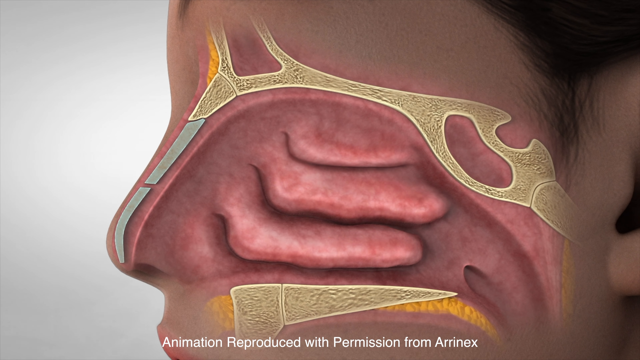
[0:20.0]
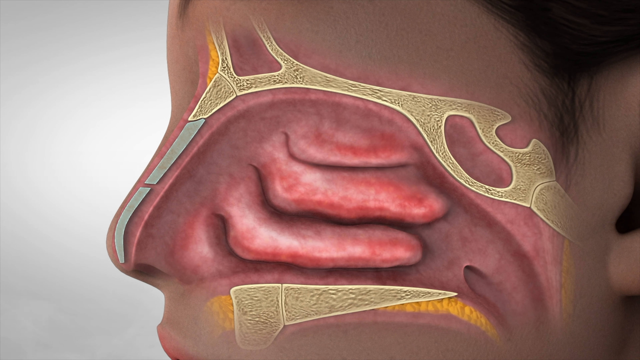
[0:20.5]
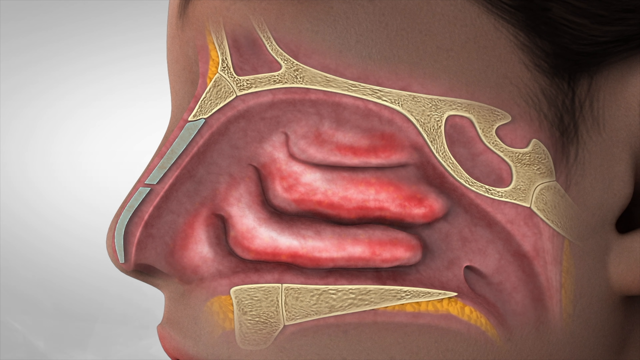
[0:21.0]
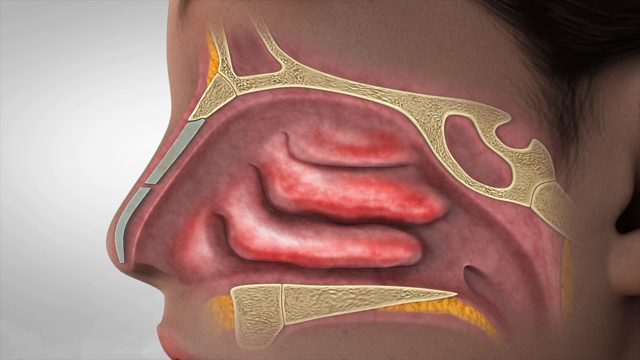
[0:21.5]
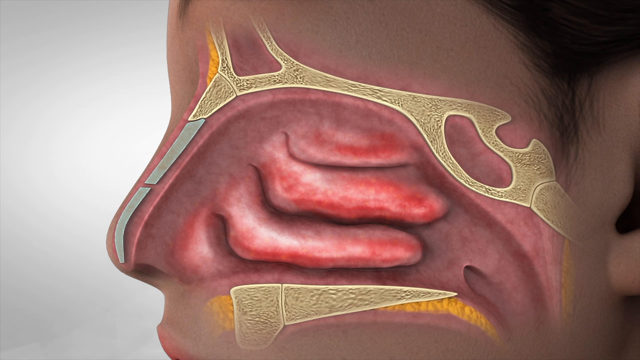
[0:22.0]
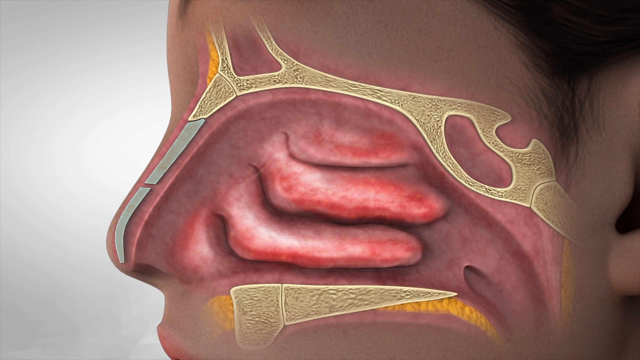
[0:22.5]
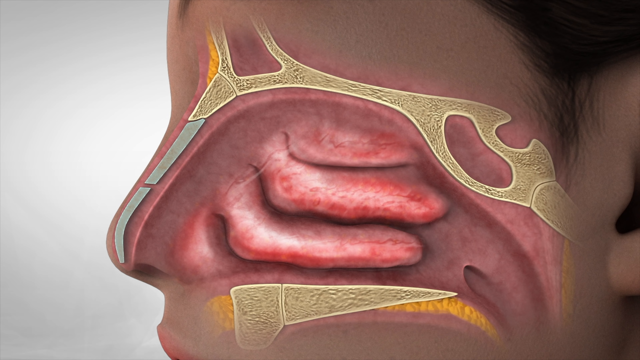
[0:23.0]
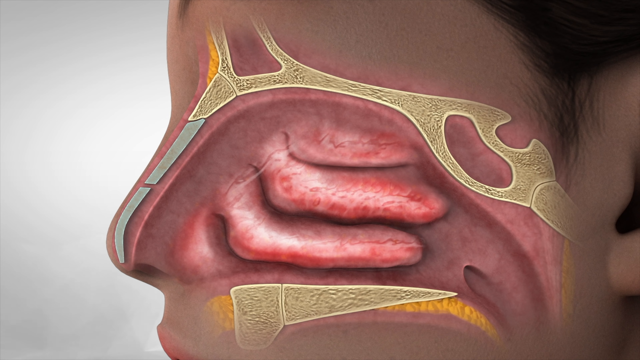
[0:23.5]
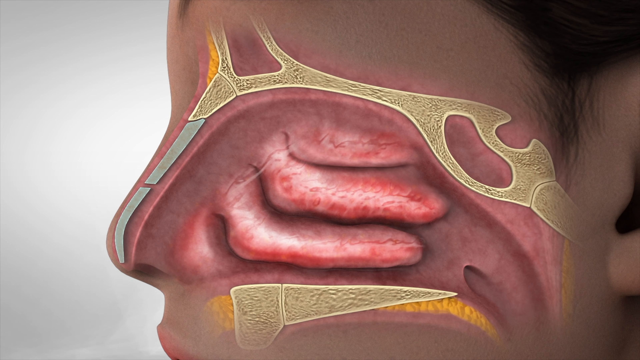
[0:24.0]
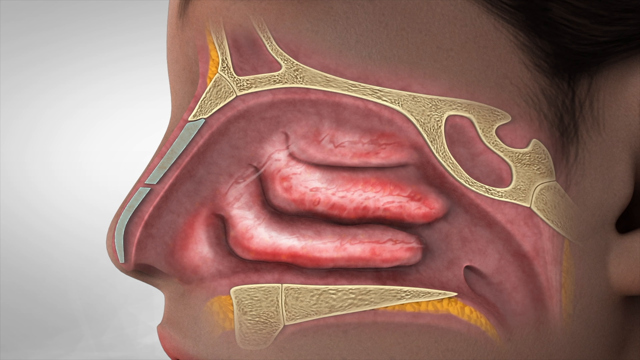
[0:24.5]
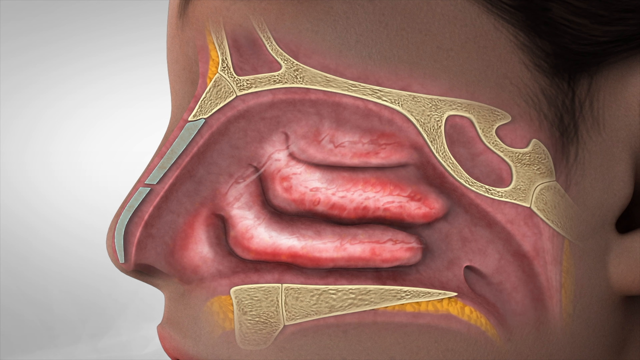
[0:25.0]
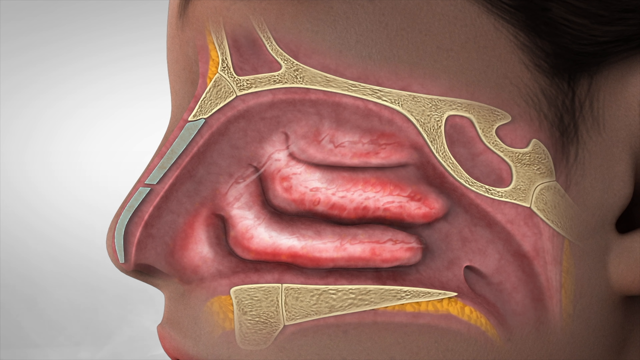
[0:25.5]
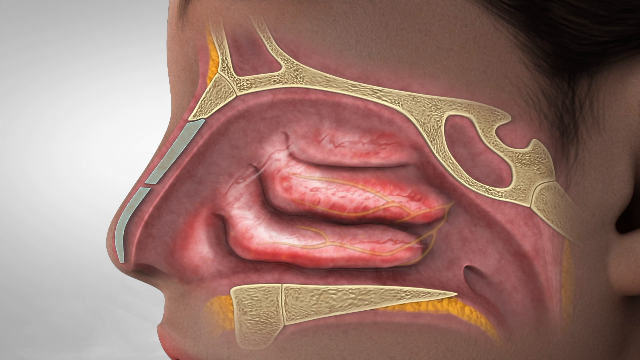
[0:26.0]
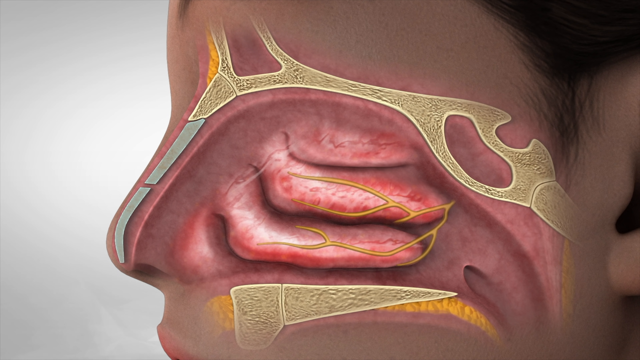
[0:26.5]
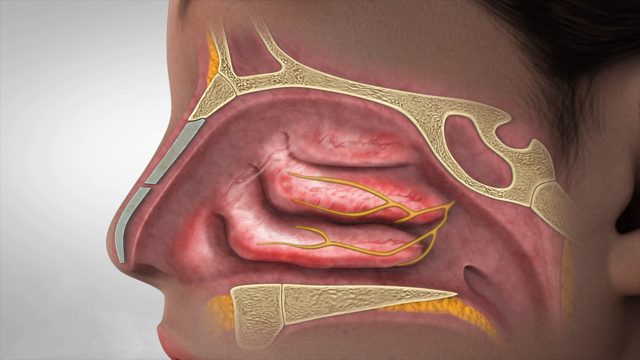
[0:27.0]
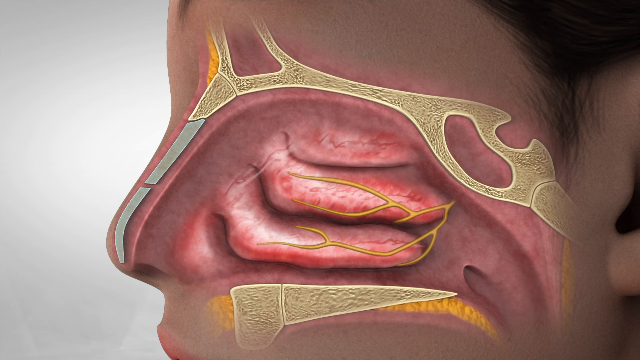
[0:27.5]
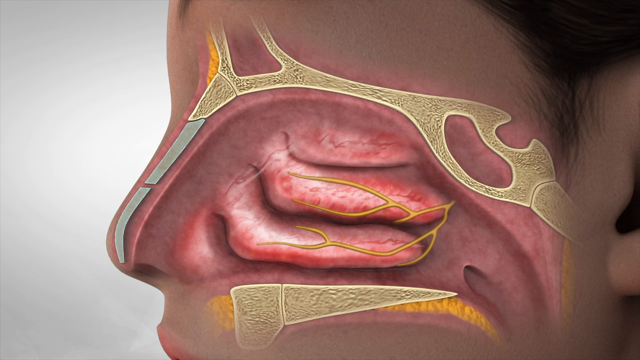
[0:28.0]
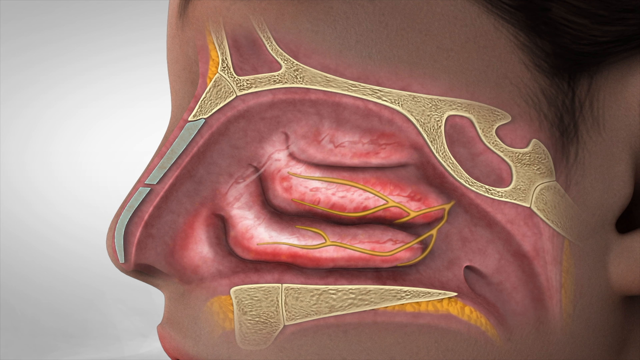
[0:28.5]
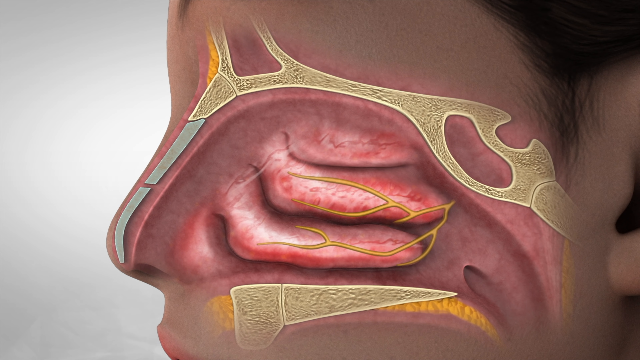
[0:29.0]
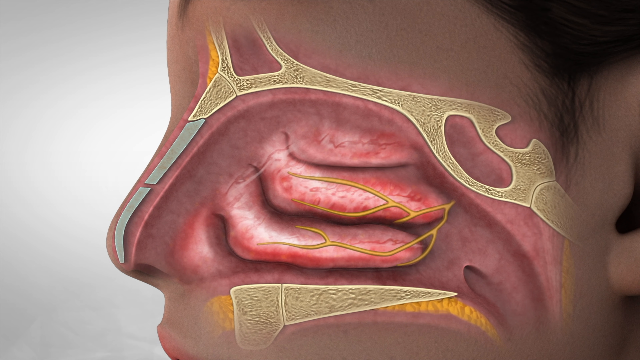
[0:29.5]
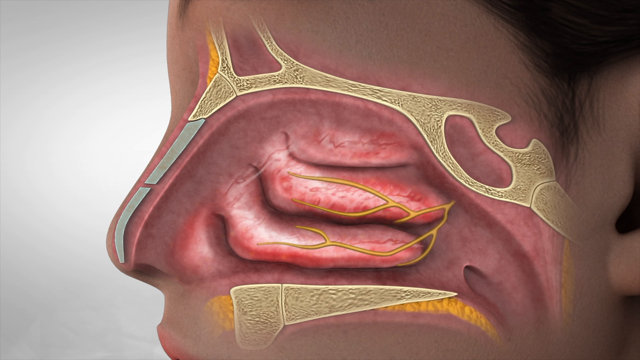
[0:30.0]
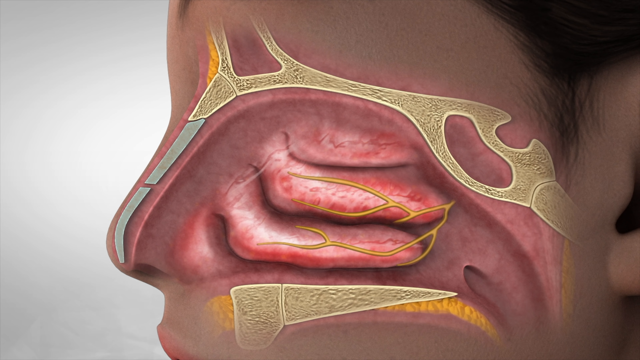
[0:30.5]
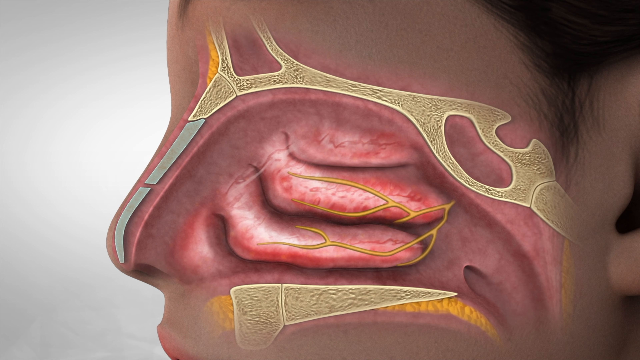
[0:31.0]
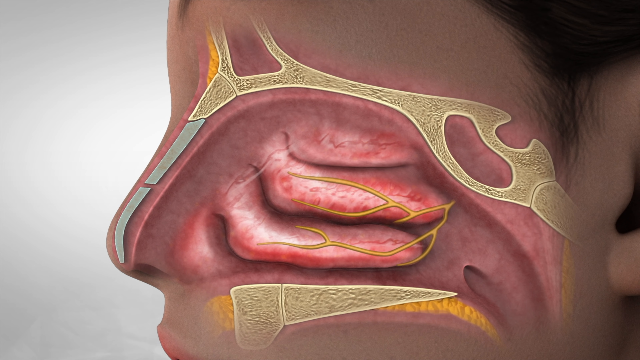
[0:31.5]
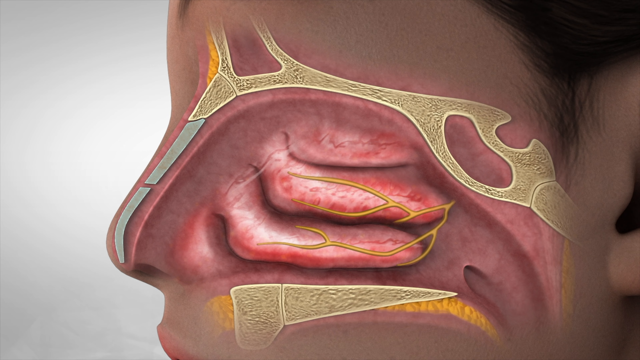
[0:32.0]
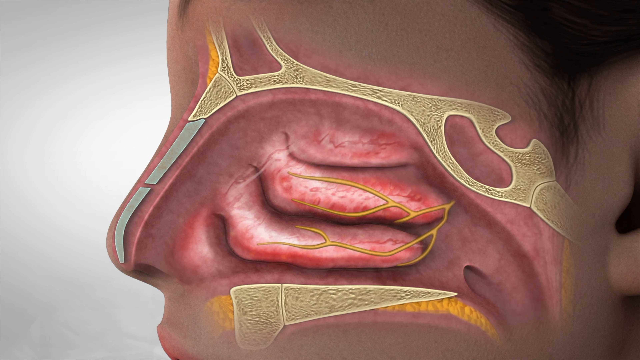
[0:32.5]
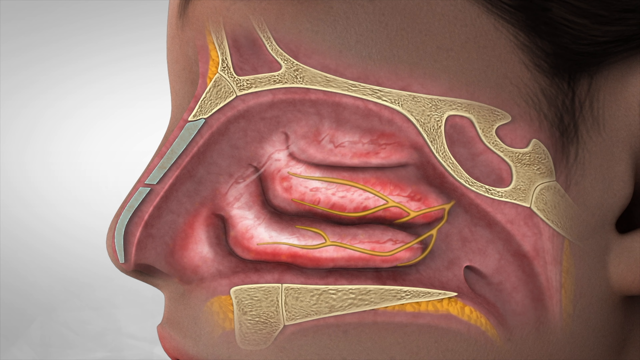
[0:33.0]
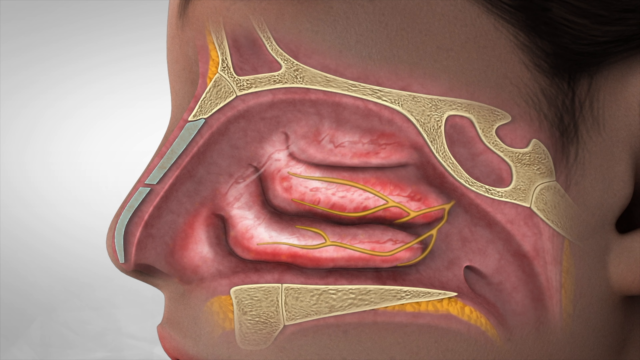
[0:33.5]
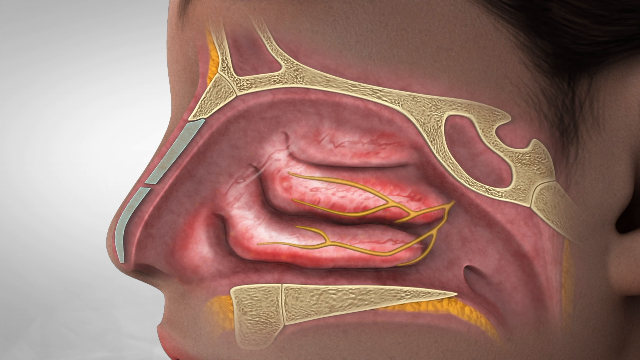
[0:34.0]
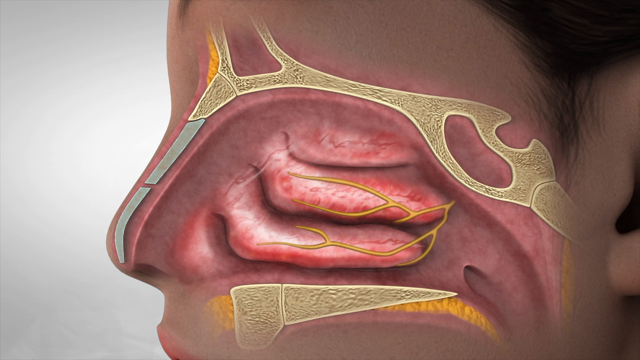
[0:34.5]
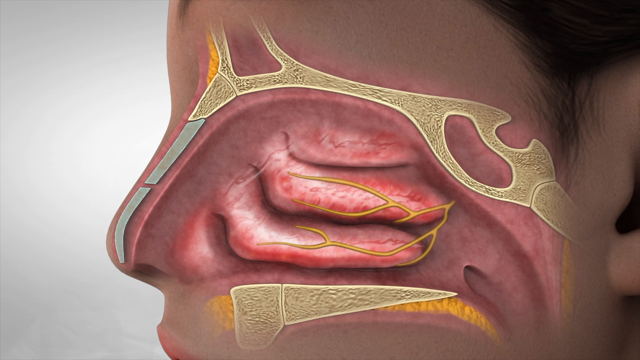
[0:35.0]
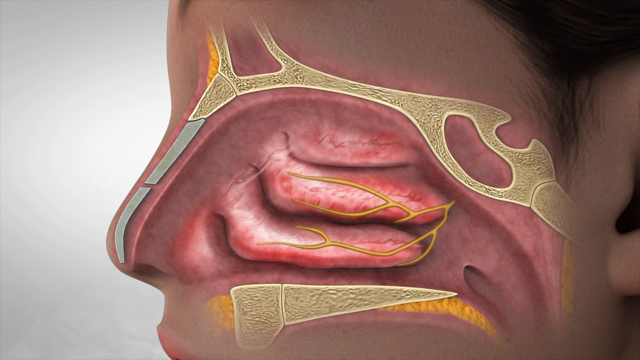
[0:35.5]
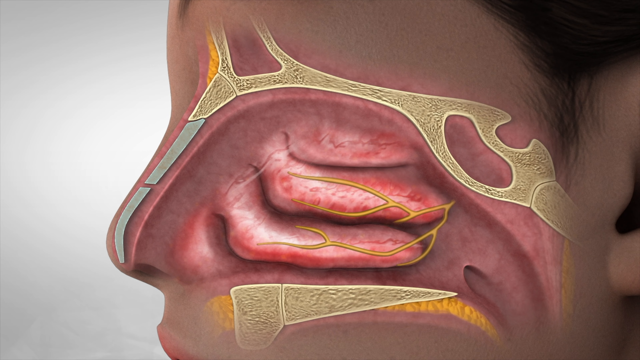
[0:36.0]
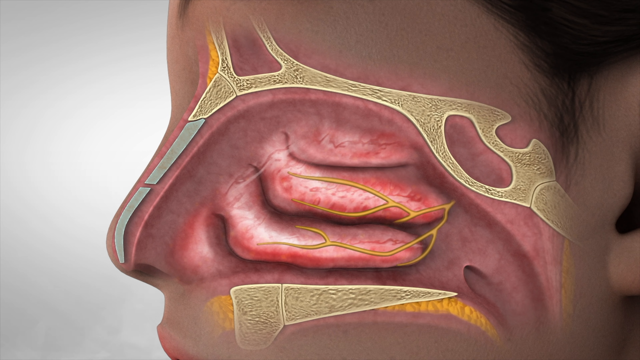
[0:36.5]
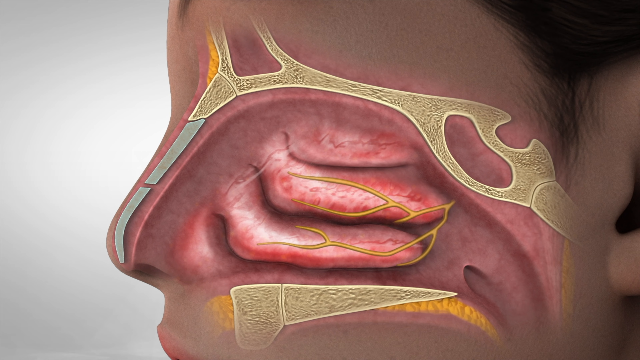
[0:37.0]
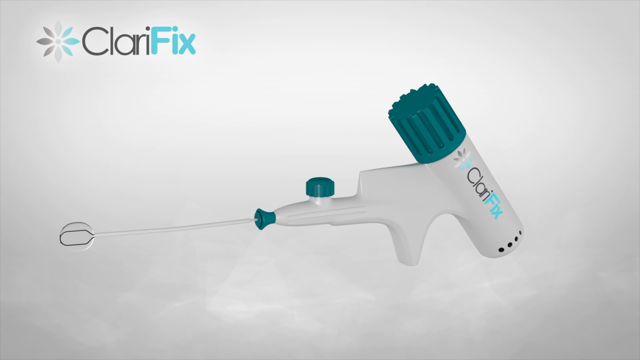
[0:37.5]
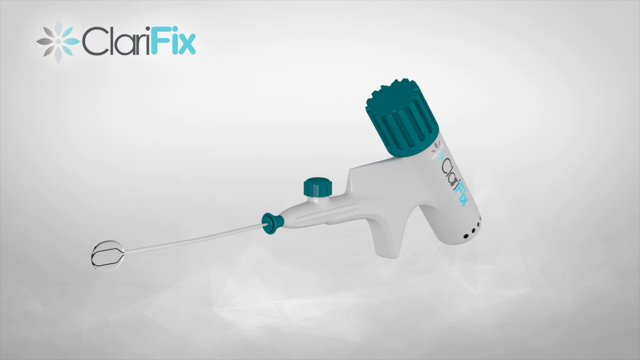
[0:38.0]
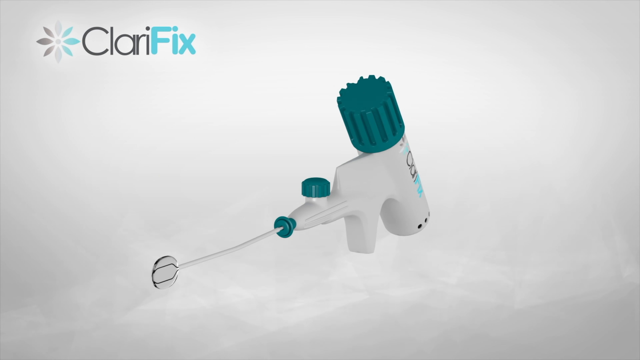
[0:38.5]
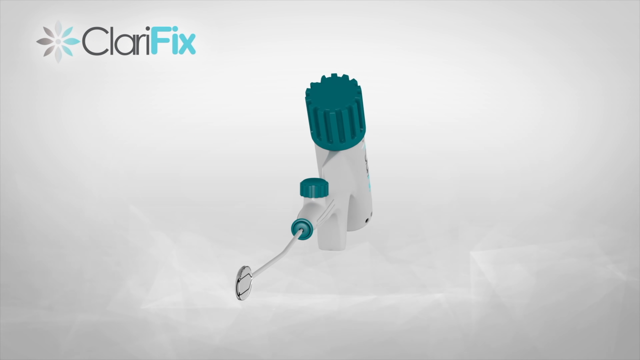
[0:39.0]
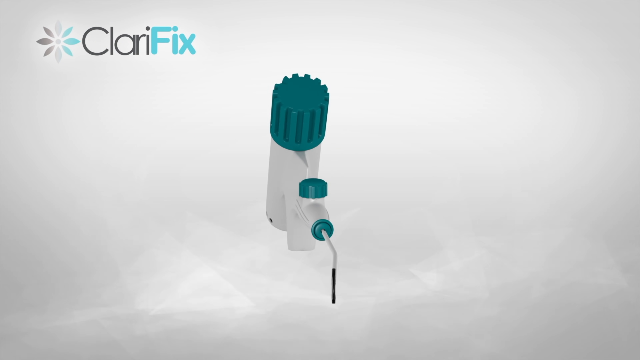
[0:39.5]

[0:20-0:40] The graphic shows different parts of the nasal cavity, with various lines and pathways, and stays on screen for quite some time. Toward the end, what appears to be some sort of swabbing or steaming device appears, also an animated graphic rather than a real object anyone is holding. The camera spins to show the product from different angles. The product is branded Clarifix and is teal, white and gray, and appears possibly to be a prototype. The device looks rather long and large.